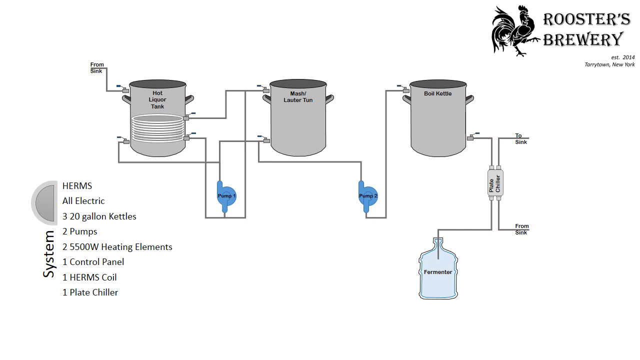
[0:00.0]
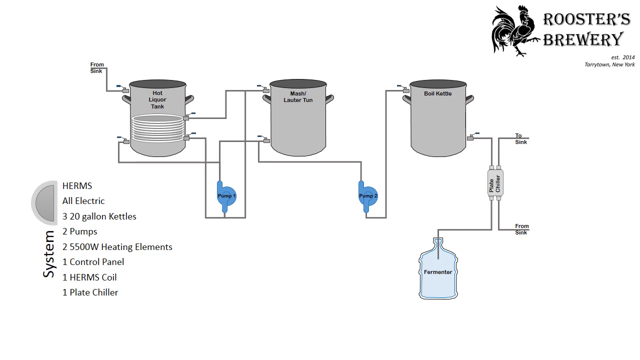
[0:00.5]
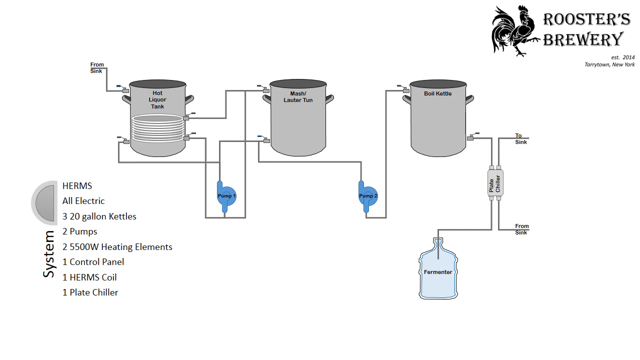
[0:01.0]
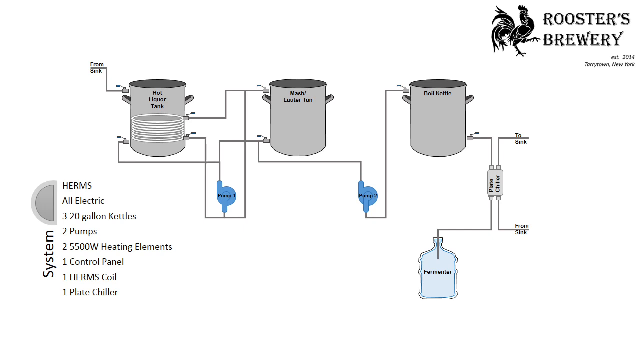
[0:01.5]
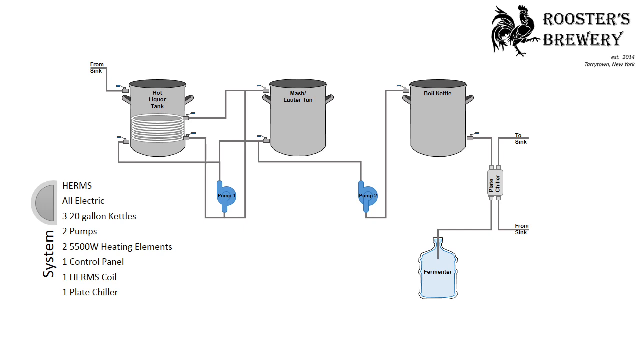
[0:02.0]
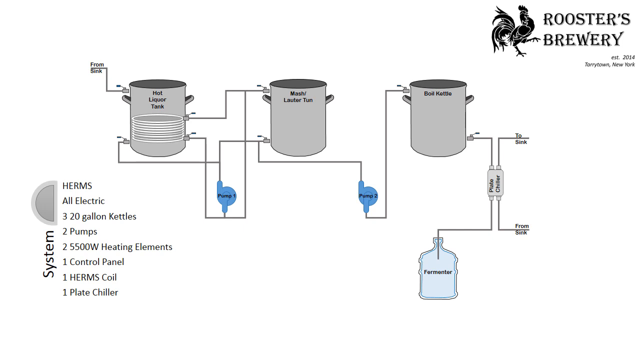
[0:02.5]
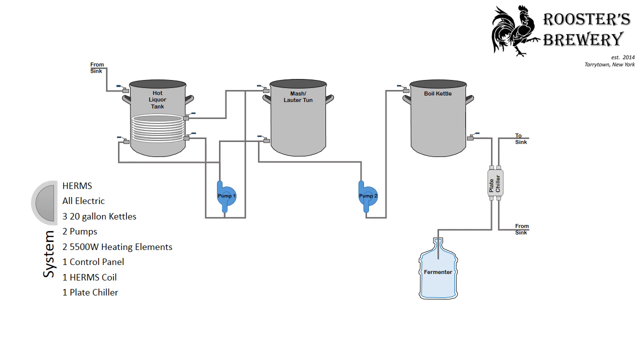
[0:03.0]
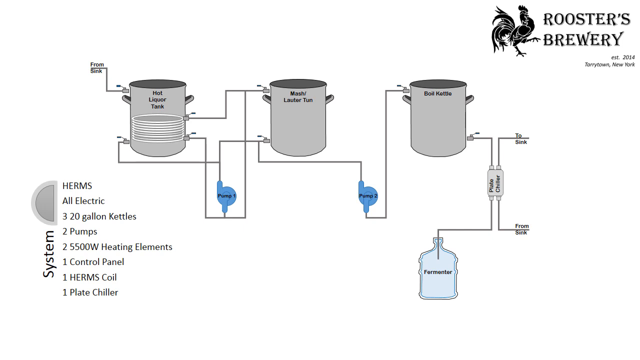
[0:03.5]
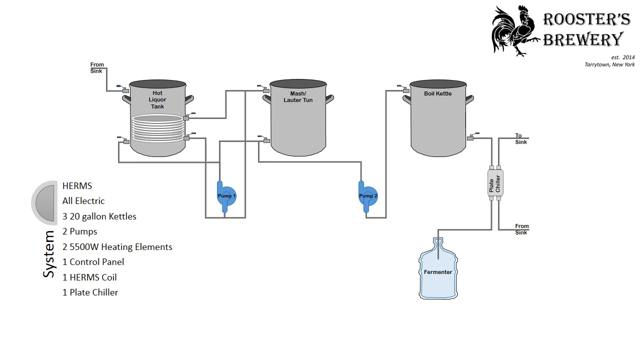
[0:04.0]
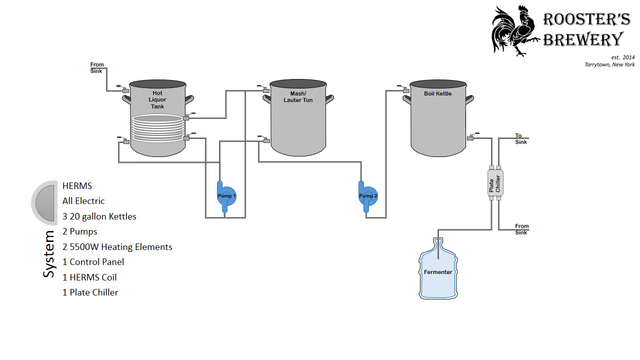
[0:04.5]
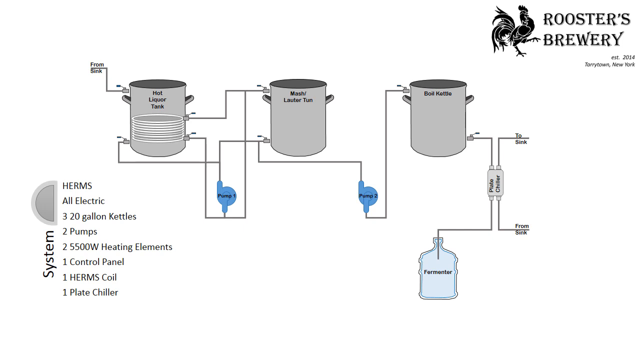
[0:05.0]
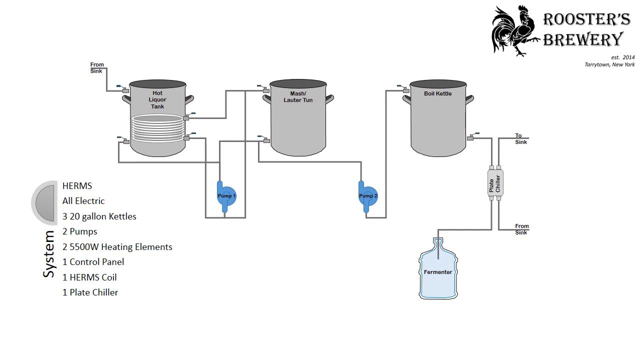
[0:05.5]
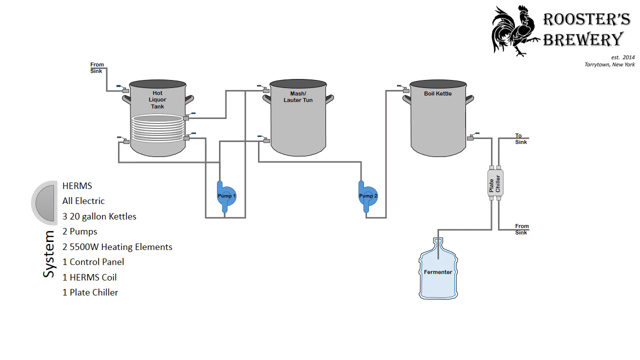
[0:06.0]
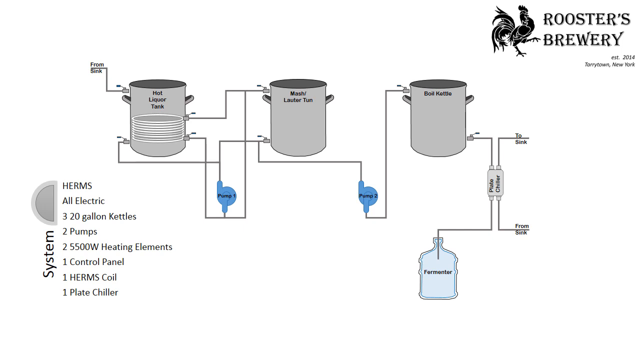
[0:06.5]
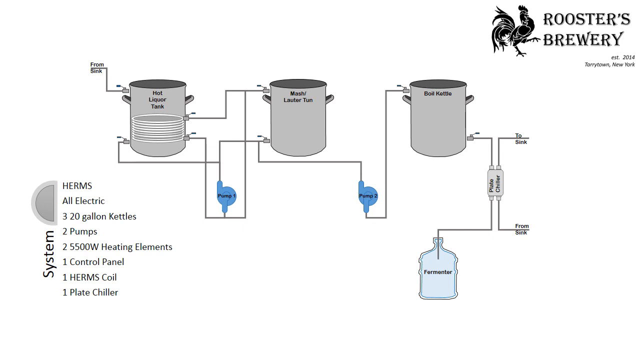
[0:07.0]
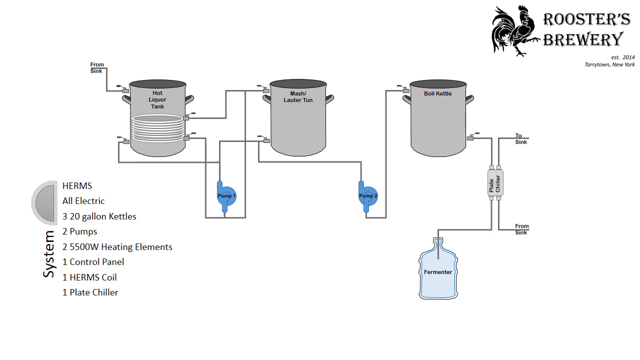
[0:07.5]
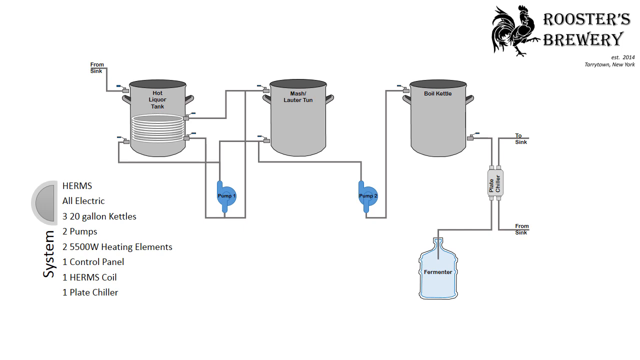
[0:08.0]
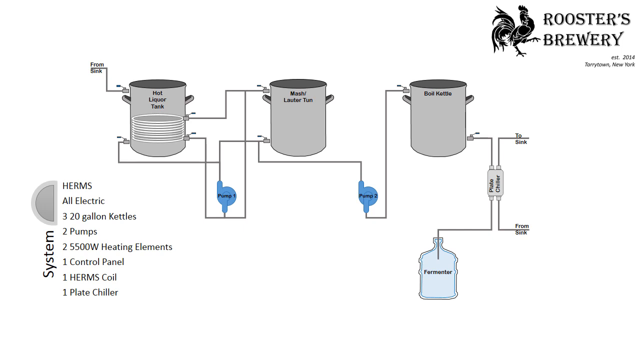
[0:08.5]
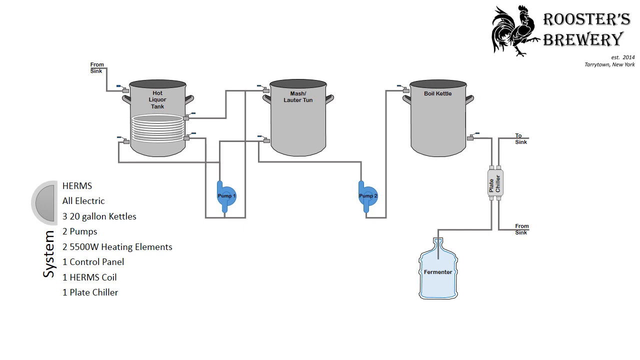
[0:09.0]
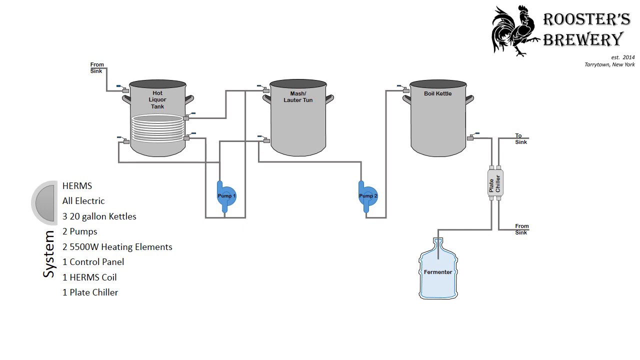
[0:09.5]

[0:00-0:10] A simple design for the Roasters Brewery appears, with an icon of a black rooster on the left part of the text. Text right below it reads "ESD 2014", along with the location Fairytown, New York. The system is made up of three big pots or tanks. The design runs from the sink toward the hot liquor tank, which has four different ways for something to leave or enter. It connects to the second pot through another pipe, and there are also two other ways for liquid to leave. From the left side, liquid goes into a pump labeled pump number one and combines with liquid from pot number two; from the other side, it also goes toward pump one and is fed to the other side of the second pot. The second pot has a pipe connecting to the second pump, which leads to the boil kettle. From there it moves to another device with text on it, apparently reading "plate chiller", which connects to a fermenter and takes liquid from and to the sink, probably to recycle water. A list on the left side of the screen shows all the parts of the design: three 20-gallon kettles, two pumps, two 5,500-watt heating elements, one control panel, one Hermes coil and one plate chiller.